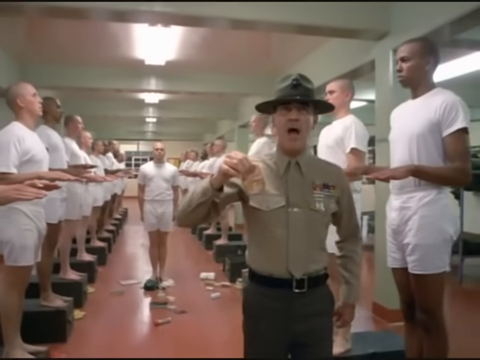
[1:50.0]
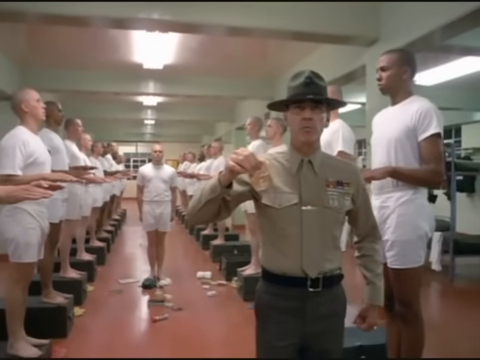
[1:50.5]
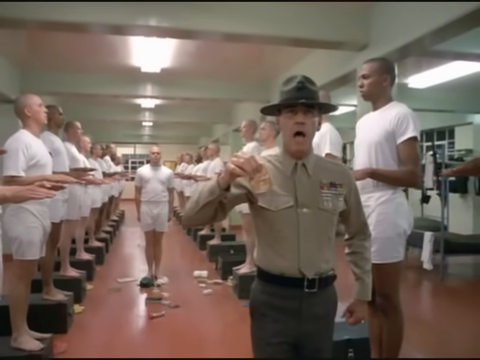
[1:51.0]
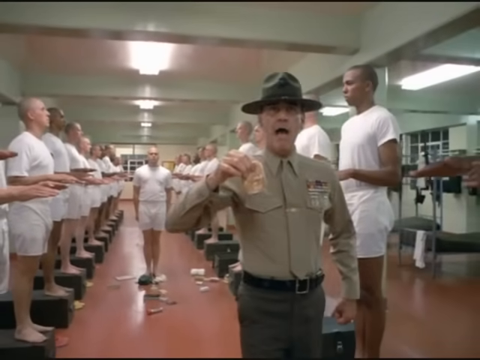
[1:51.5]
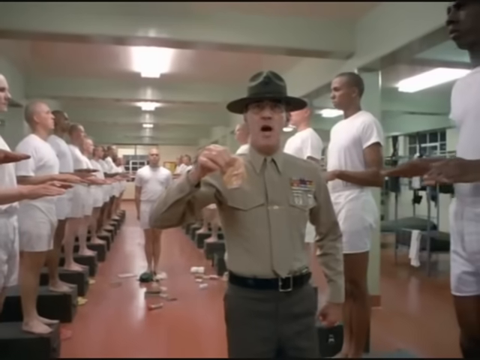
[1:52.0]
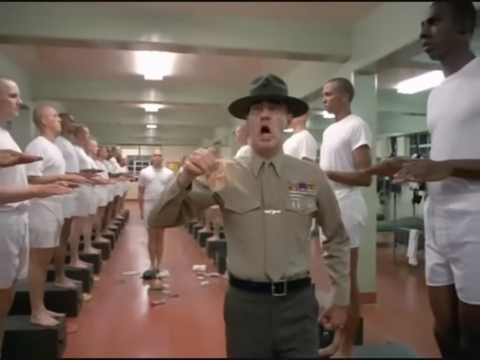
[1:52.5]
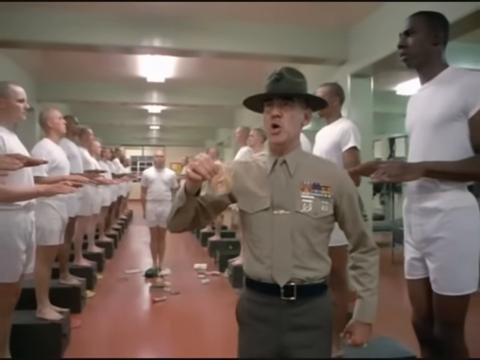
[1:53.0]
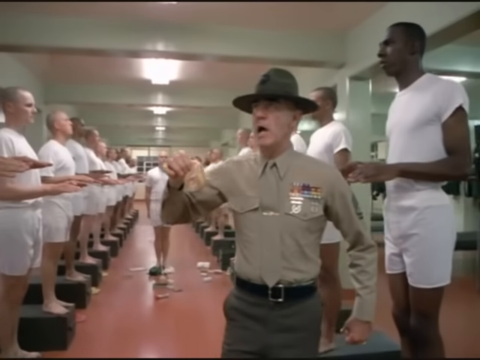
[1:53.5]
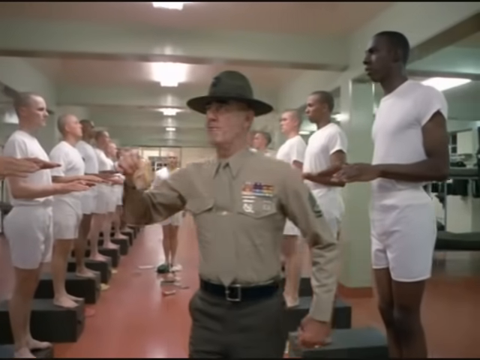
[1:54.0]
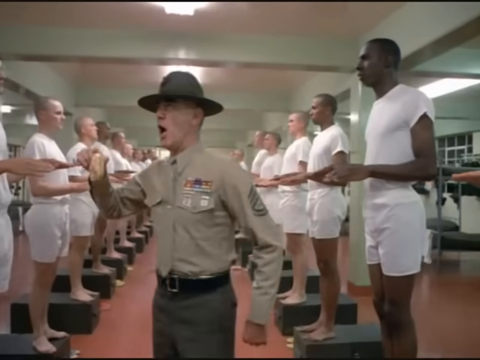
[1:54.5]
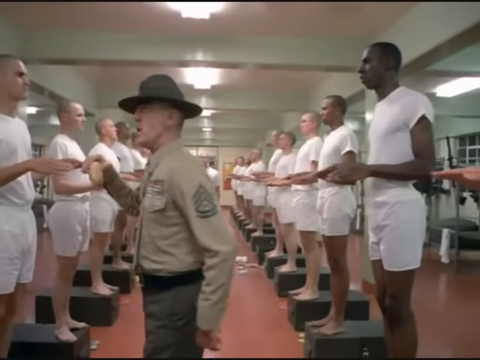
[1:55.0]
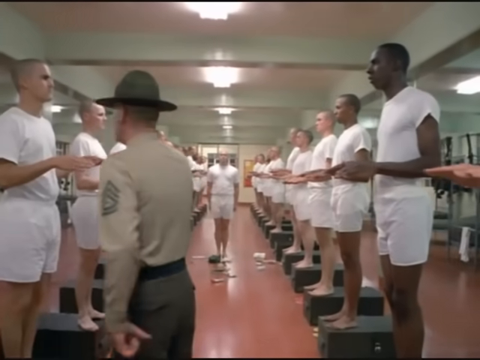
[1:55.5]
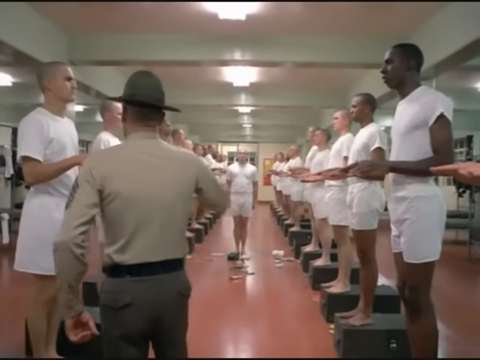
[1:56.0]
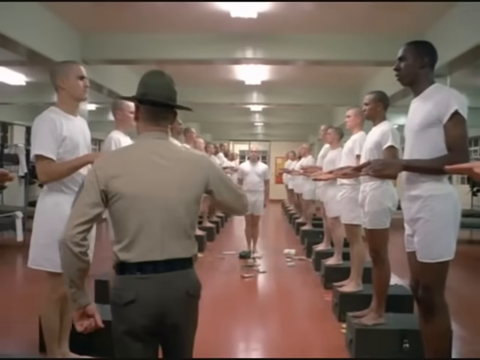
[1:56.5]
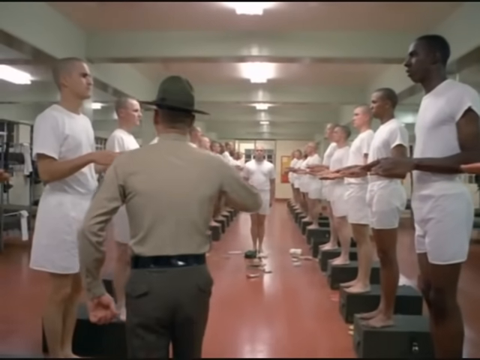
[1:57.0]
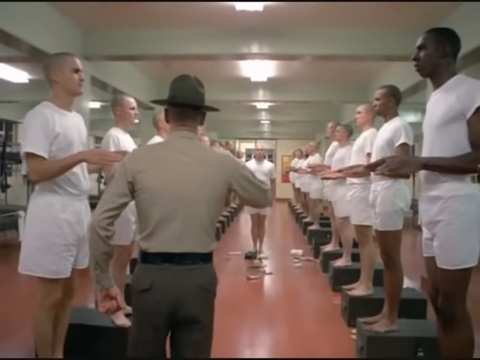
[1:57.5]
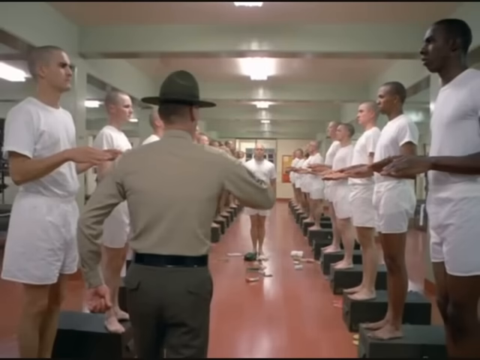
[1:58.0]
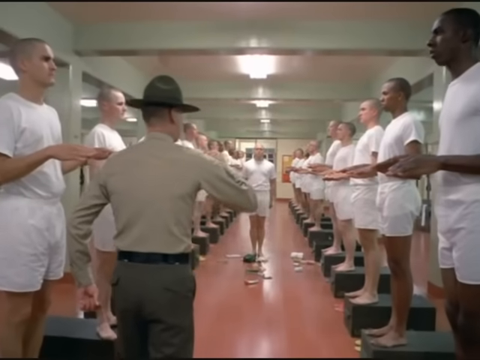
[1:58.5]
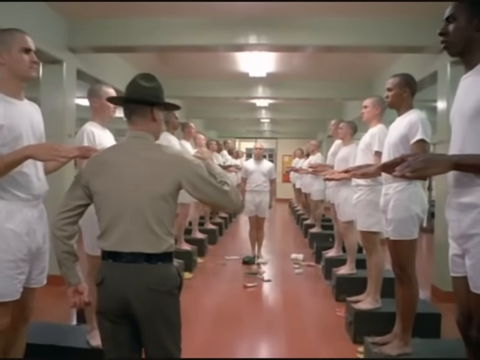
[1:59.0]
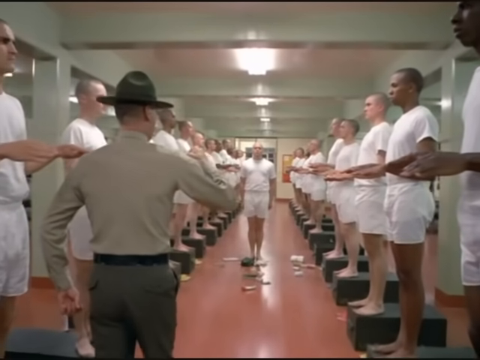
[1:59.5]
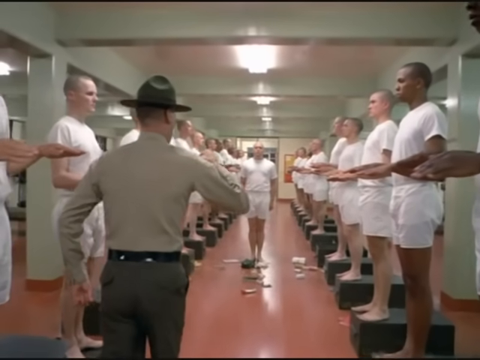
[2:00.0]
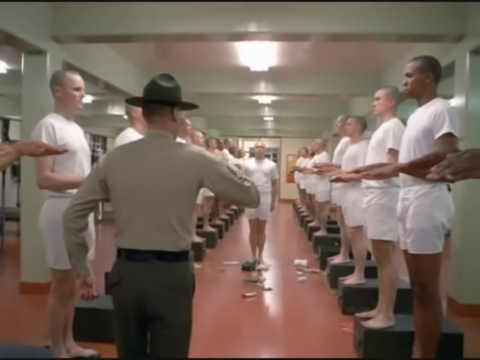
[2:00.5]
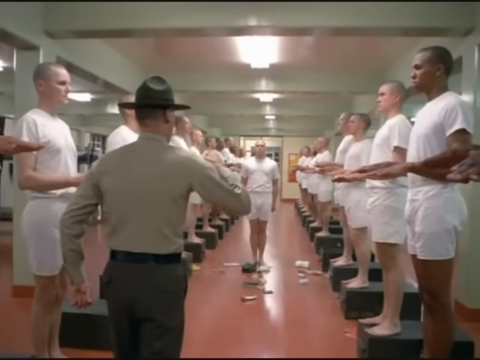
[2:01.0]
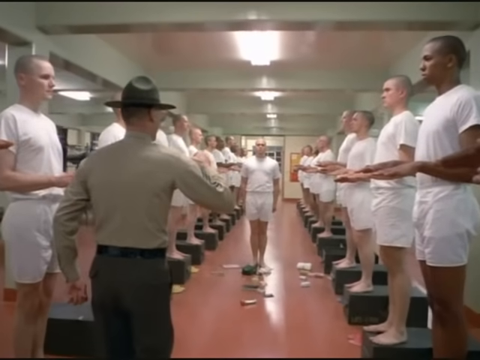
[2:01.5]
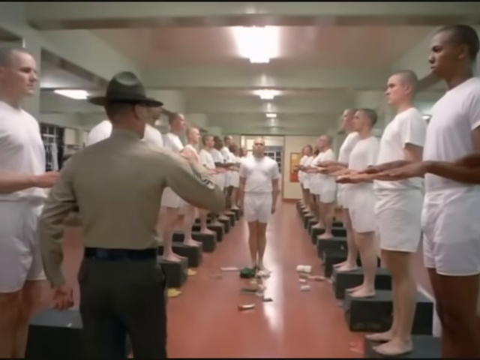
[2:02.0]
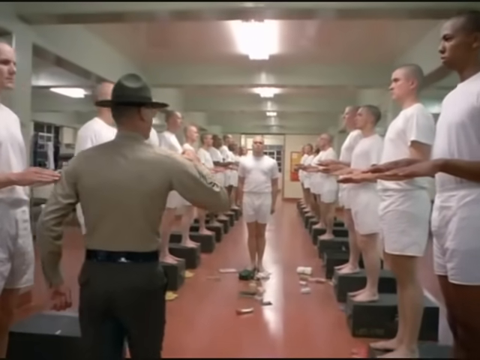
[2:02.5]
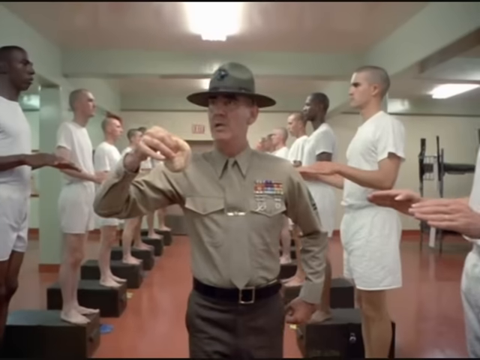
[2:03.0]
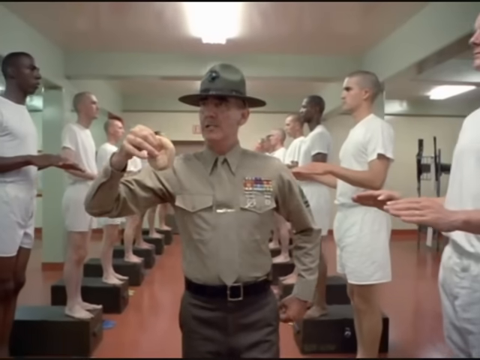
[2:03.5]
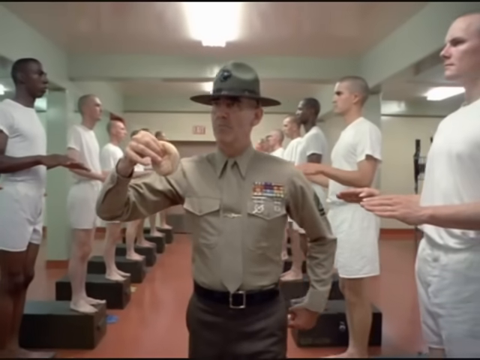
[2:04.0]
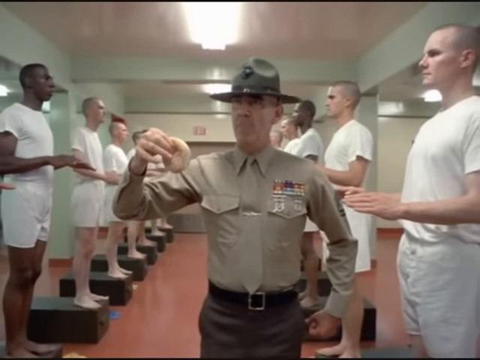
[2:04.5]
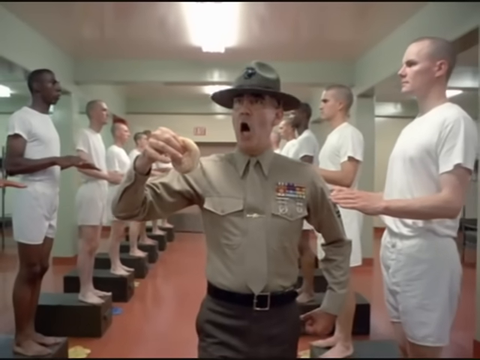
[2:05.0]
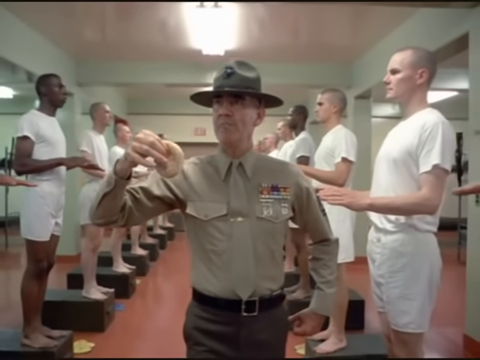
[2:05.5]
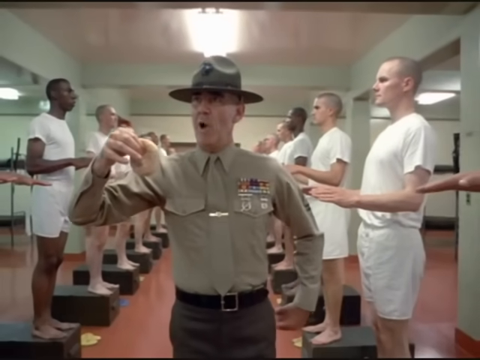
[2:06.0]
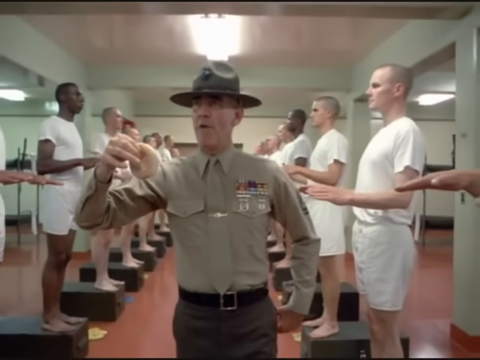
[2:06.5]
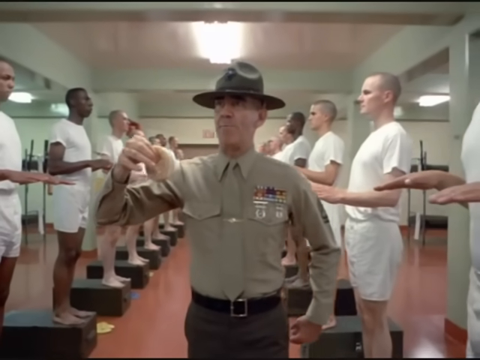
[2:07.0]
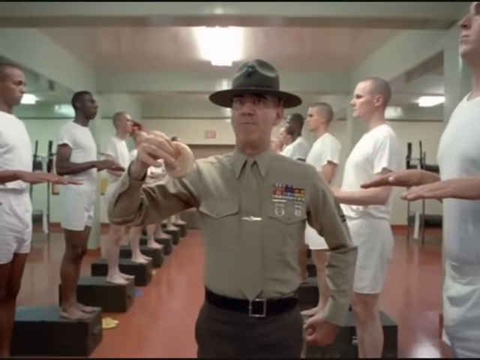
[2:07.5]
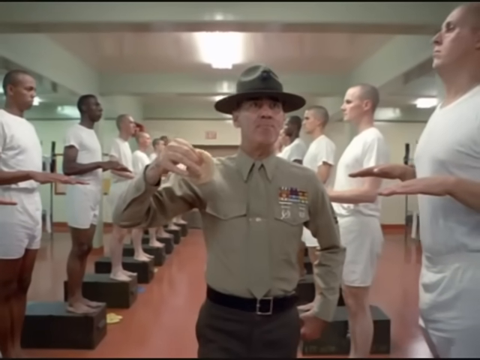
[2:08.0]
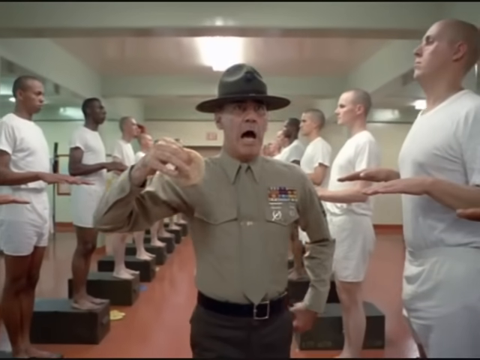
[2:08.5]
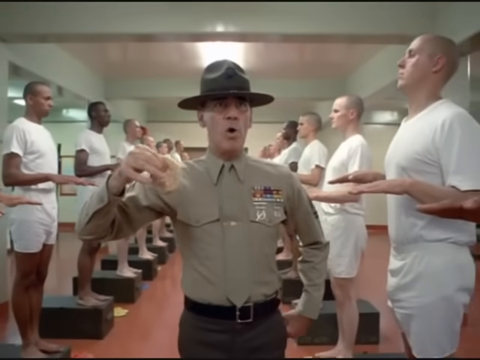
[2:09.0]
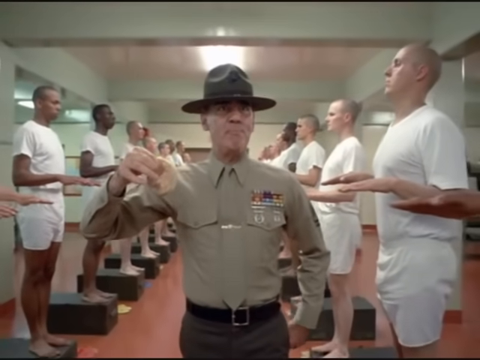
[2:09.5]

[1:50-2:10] A drill sergeant walks down an aisle. Behind him, multiple recruits wearing white t-shirts and white shorts stand barefoot on top of military foot lockers. In the center of the aisle, one recruit stands at attention with his fists at his sides, surrounded by various accessories and items that have been thrown onto the floor. The other recruits stand with their elbows bent, palms facing the ground and fingers straight out in front of them. The drill sergeant holds some kind of pastry with his right index finger and thumb, elbow bent, his other arm held in a fist at his side, as he slowly walks down the aisle away from the recruit in the center. He seems to be shouting at everyone else in the barracks room. He turns around, maintaining his body position, and continues shouting at all the other recruits. The camera angle changes from a view of his back to his front.